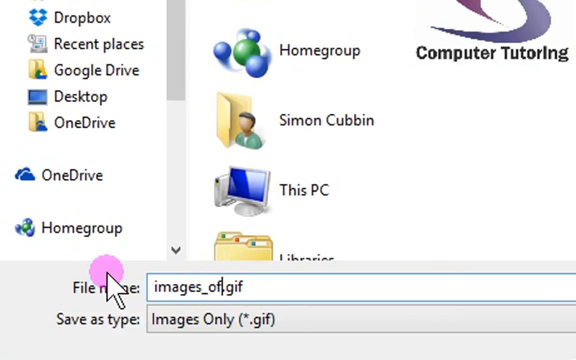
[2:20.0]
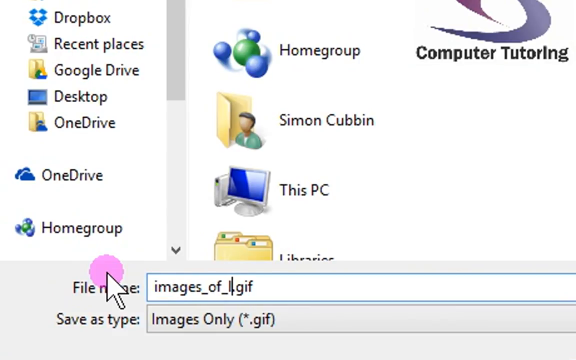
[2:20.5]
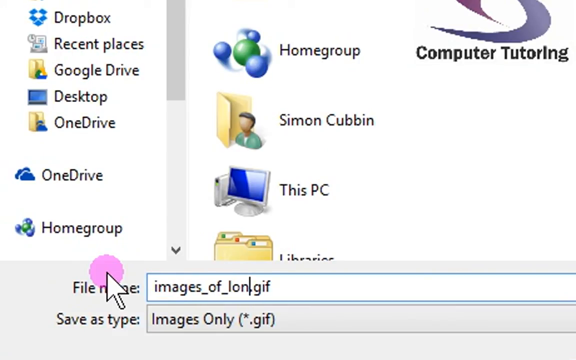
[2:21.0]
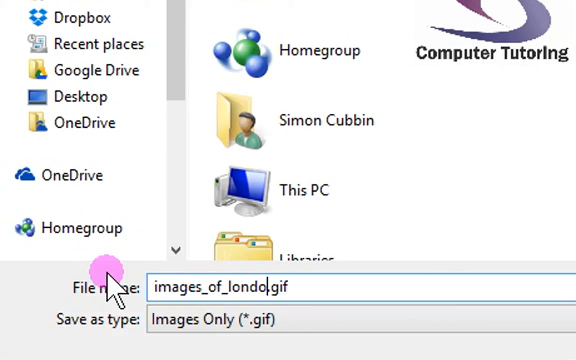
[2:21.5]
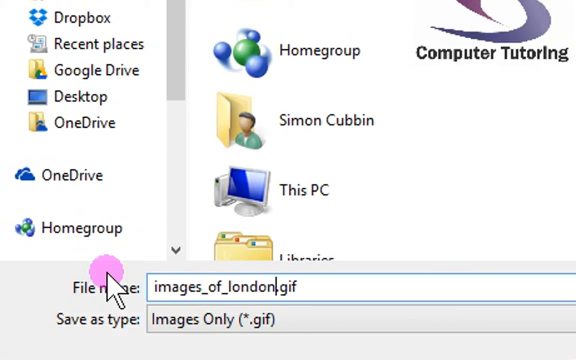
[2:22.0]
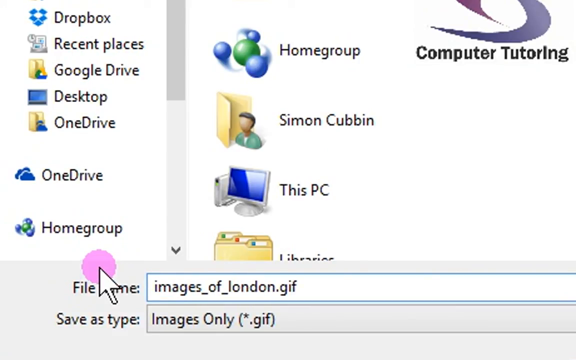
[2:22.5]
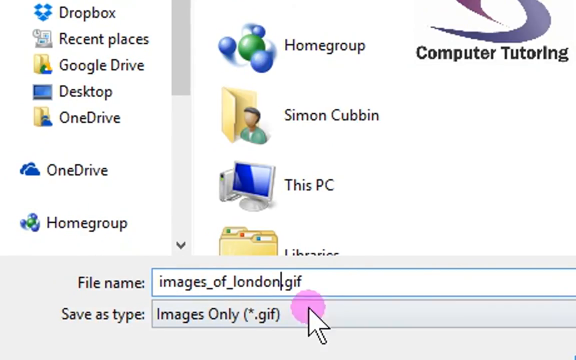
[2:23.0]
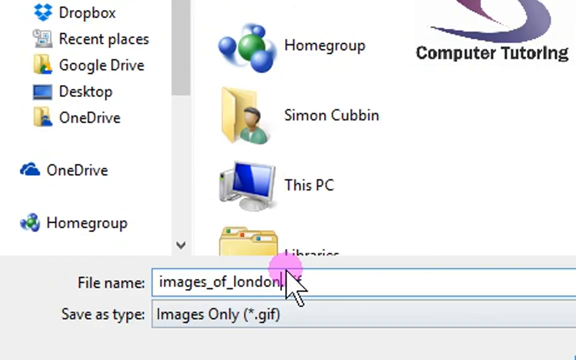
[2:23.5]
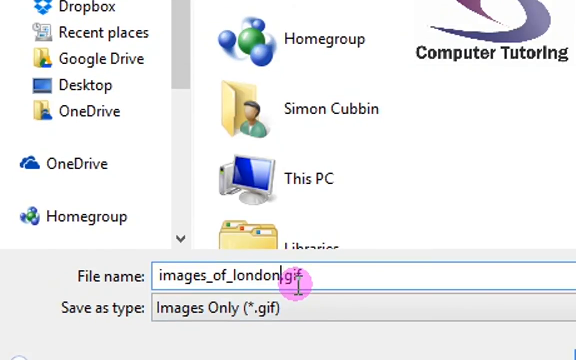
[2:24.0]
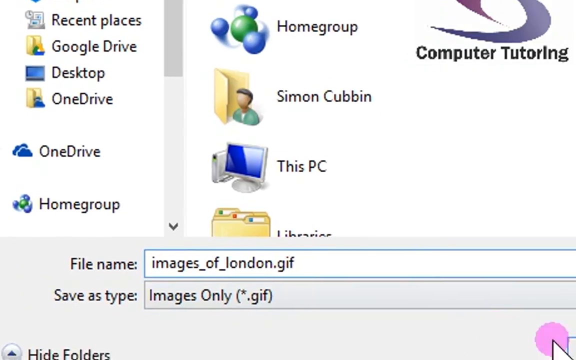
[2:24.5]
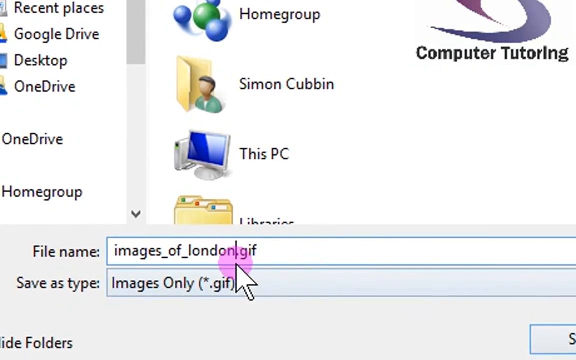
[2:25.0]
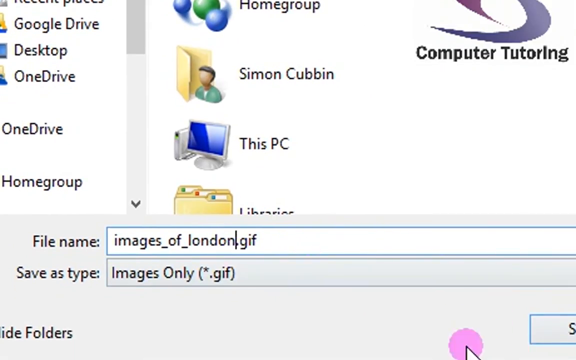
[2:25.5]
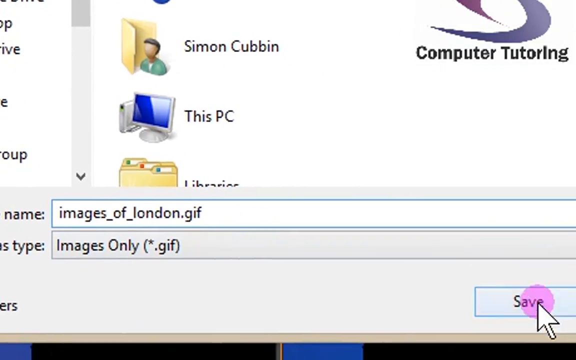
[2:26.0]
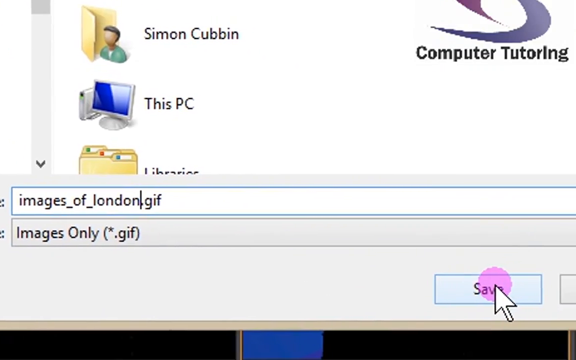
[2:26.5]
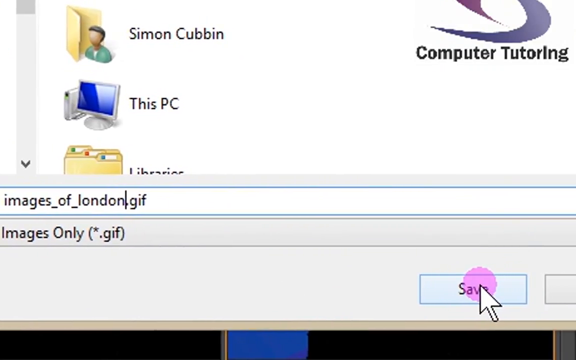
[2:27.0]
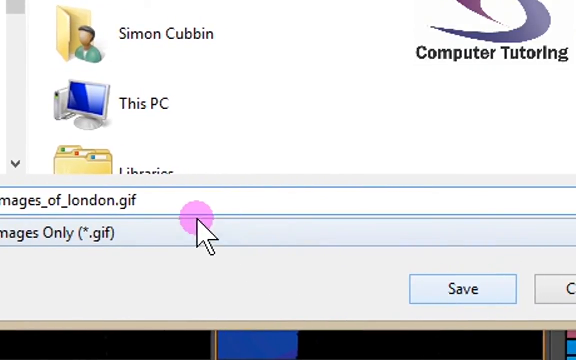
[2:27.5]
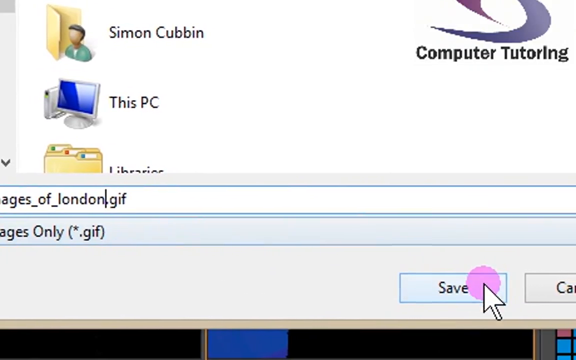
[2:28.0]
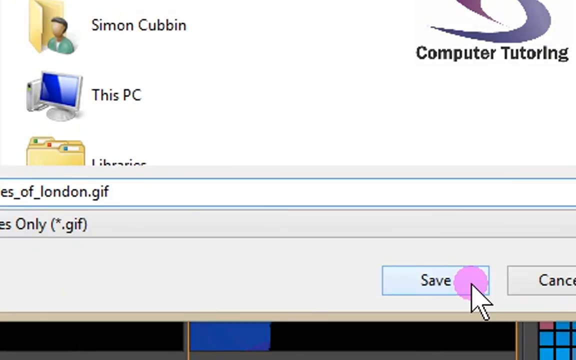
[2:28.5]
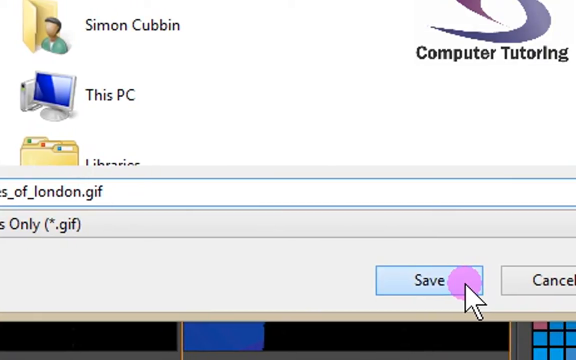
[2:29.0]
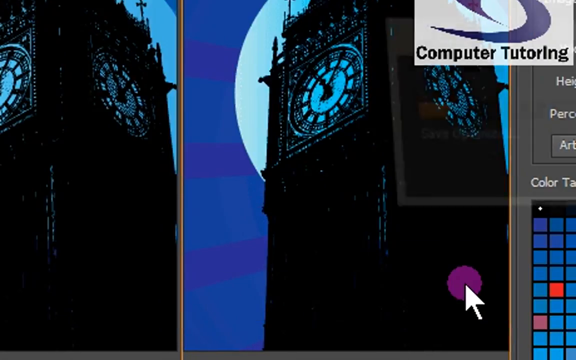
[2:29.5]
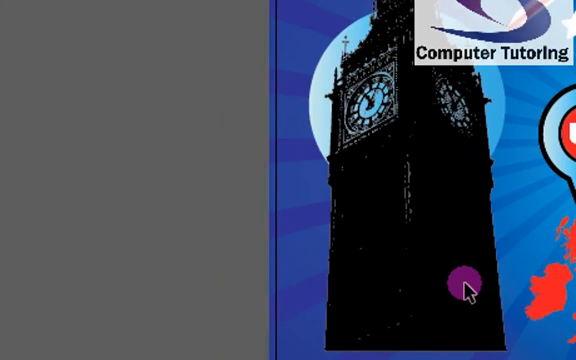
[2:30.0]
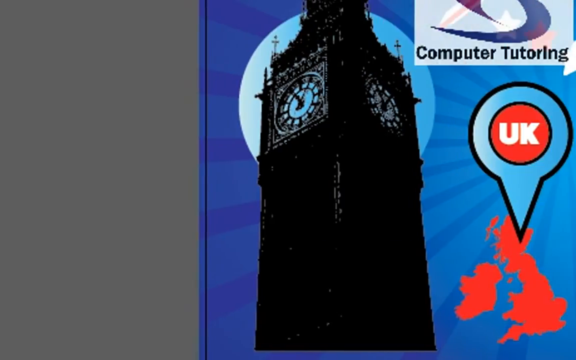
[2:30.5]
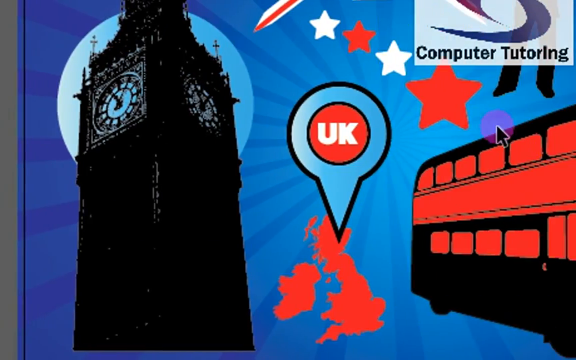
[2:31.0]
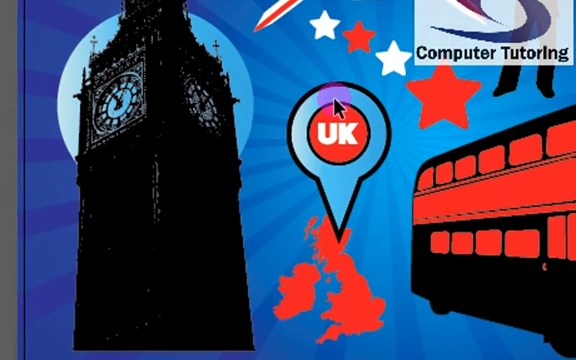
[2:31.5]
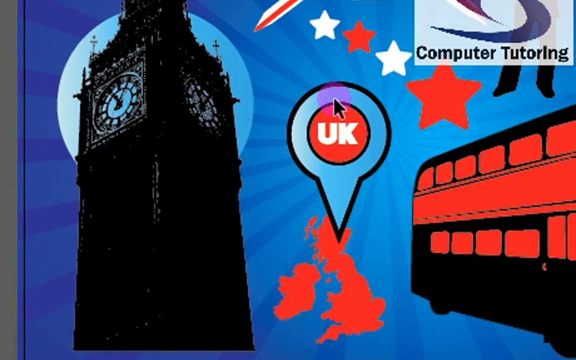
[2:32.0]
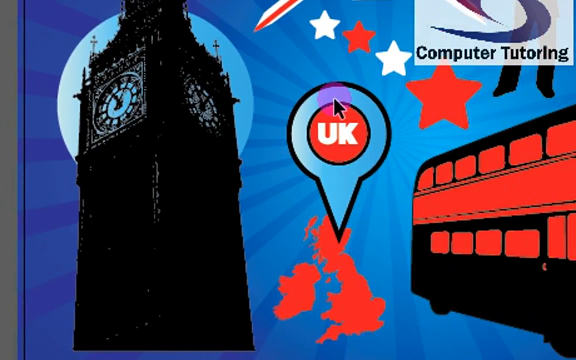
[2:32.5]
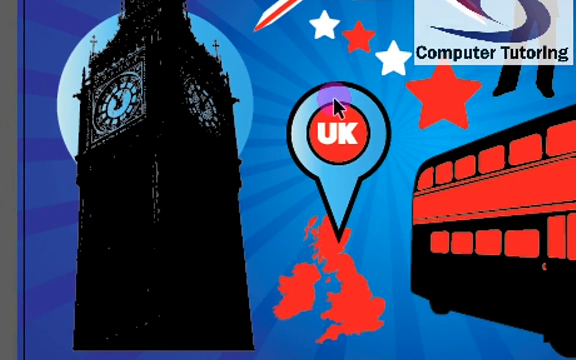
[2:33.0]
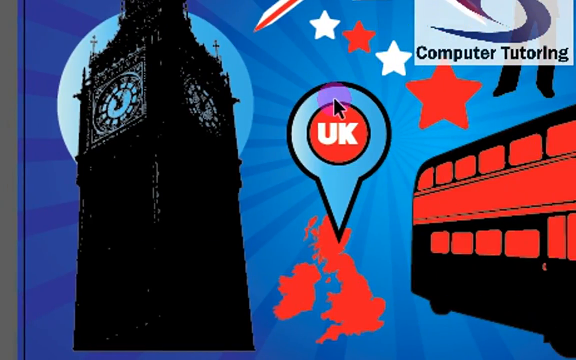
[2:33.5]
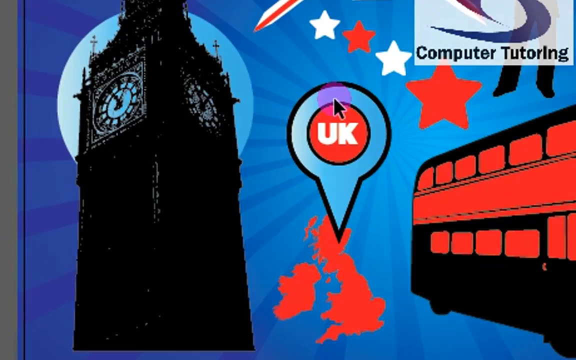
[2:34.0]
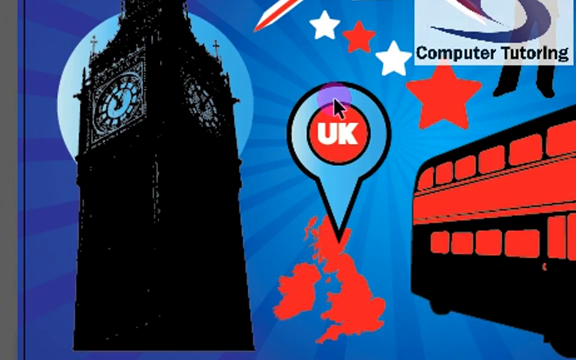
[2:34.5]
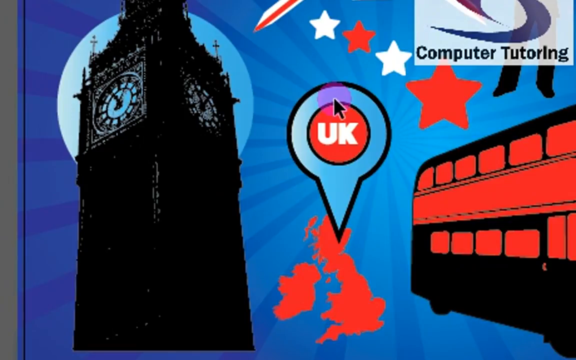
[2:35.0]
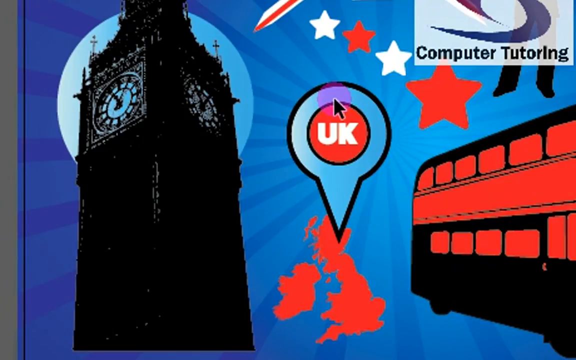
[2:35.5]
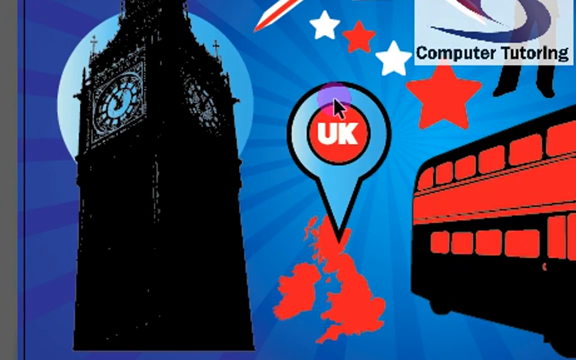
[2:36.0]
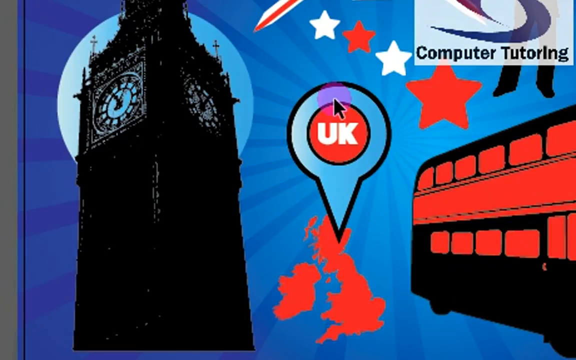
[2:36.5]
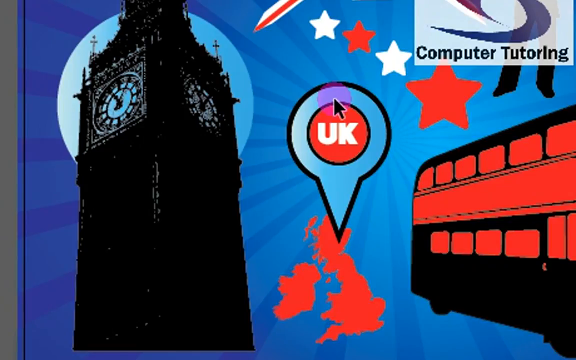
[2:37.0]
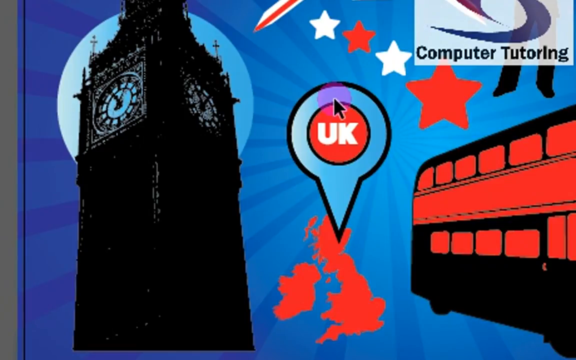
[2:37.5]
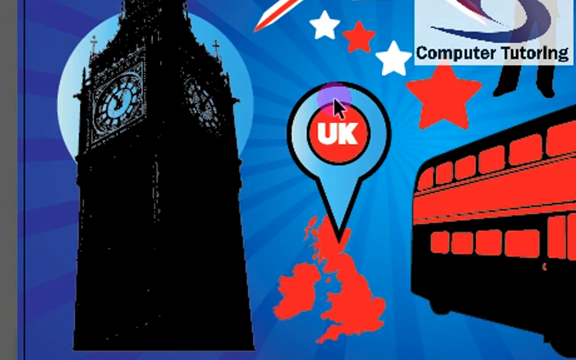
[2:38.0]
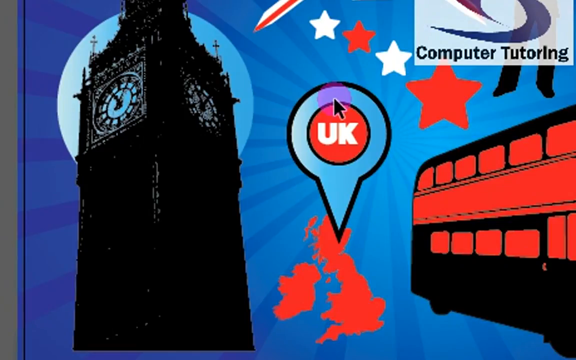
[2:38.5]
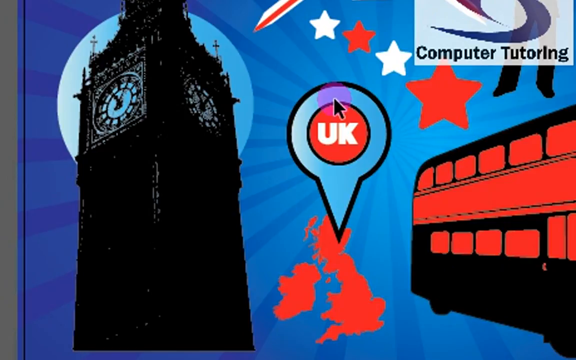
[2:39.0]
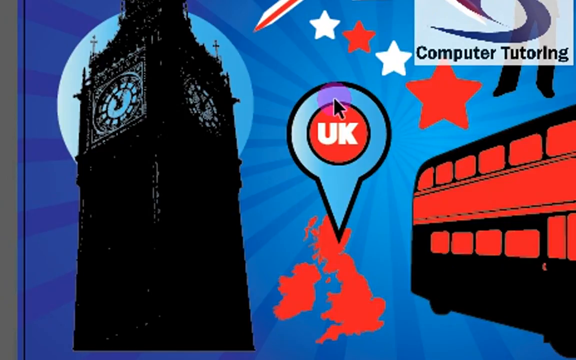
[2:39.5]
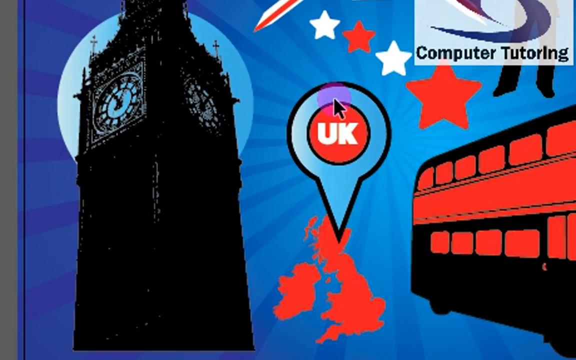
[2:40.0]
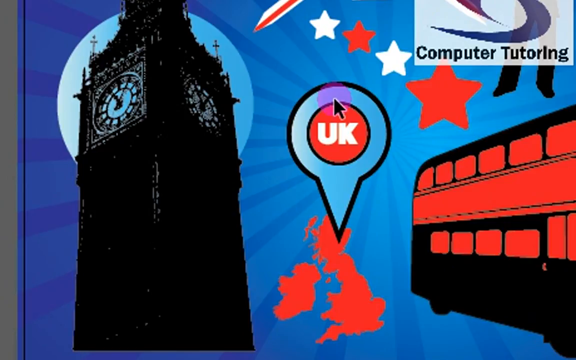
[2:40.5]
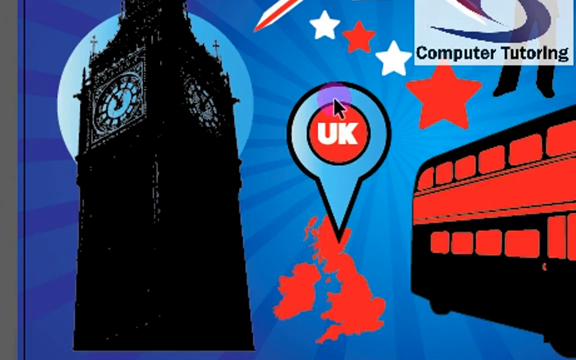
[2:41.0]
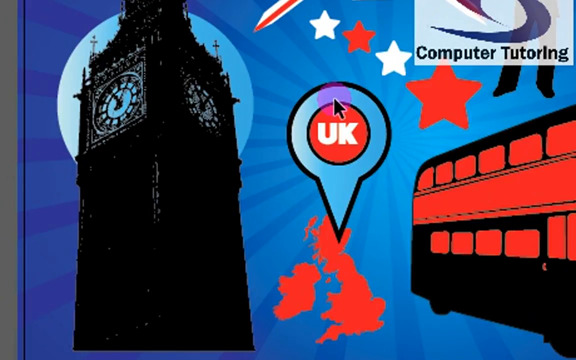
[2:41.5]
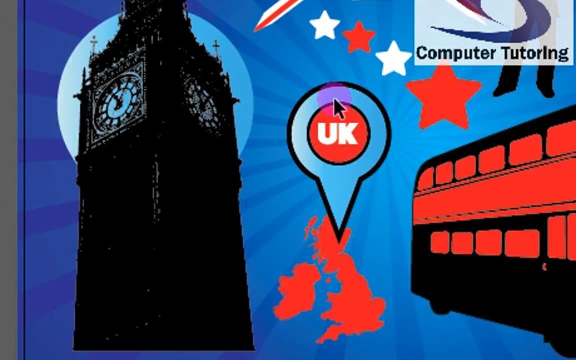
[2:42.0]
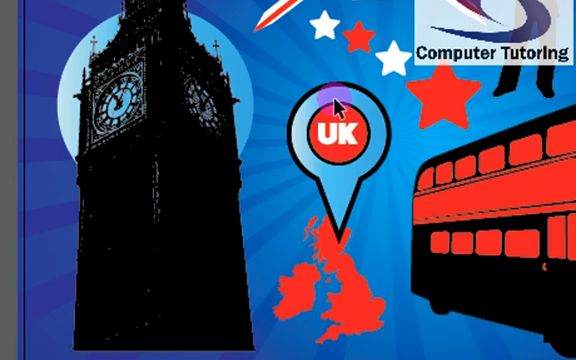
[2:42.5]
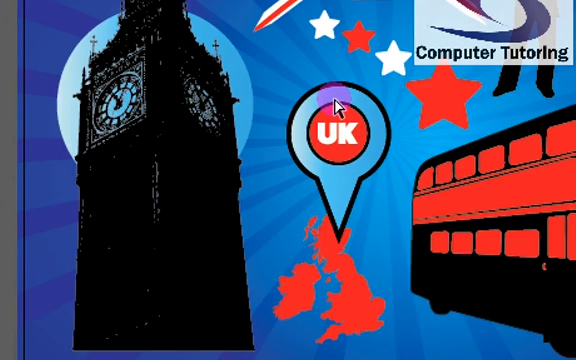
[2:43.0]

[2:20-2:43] In a video teaching image manipulation, the Computer Tutoring logo in the corner is a swirl going from the right underneath to the left, starting light purple, turning kind of gray and then blue. The computer-made Big Ben image has been manipulated and is being saved to a file; the name is changed from UK vector to "images_of.gif" and then "images_of_London.gif". A purple circle marks wherever the cursor is. Save is clicked and the file is saved. The view returns to the whole UK picture and stops there. The picture has Big Ben, a red map of the UK that includes the Republic of Ireland, a Union Jack, four stars, a heart, a red phone box and a red double-decker bus with a bobby.